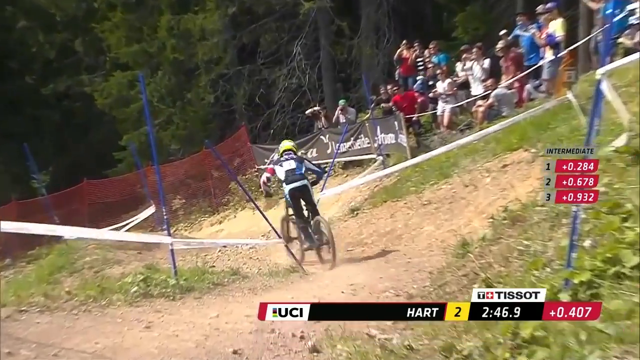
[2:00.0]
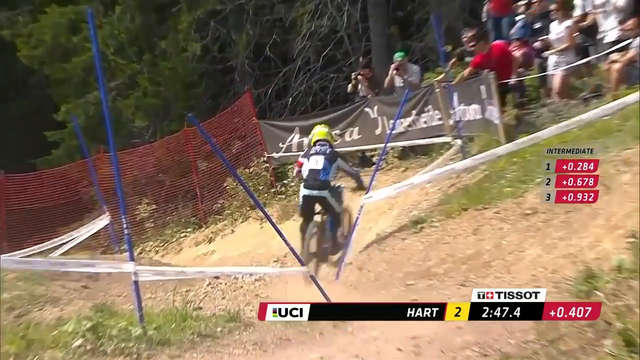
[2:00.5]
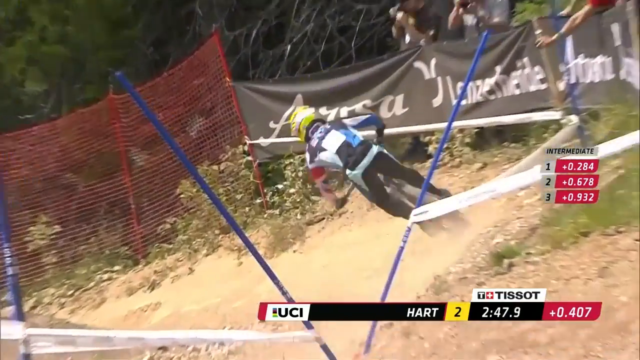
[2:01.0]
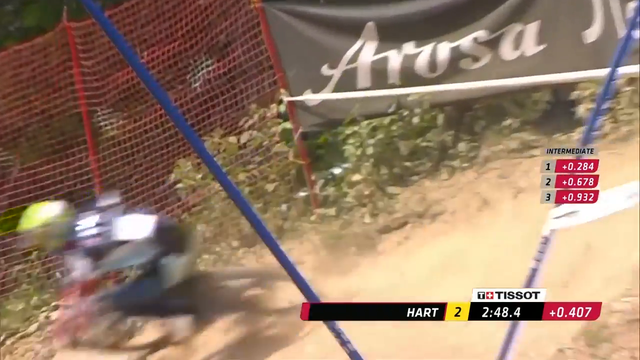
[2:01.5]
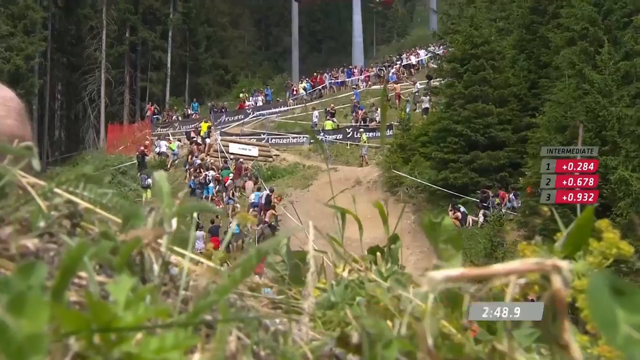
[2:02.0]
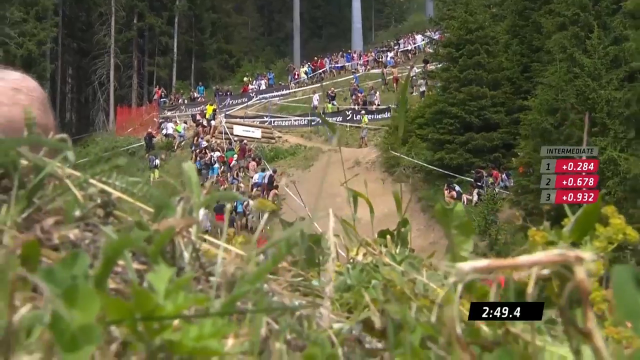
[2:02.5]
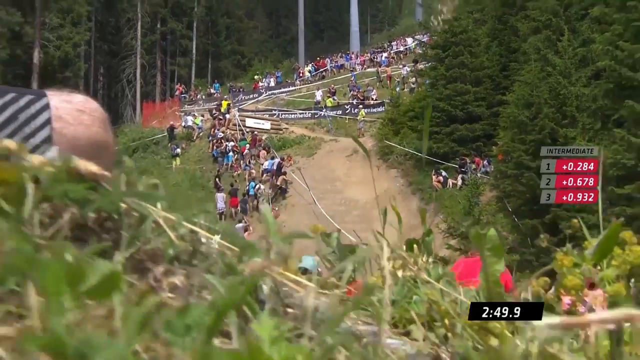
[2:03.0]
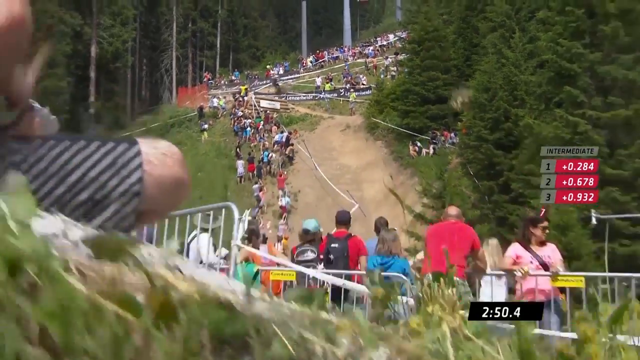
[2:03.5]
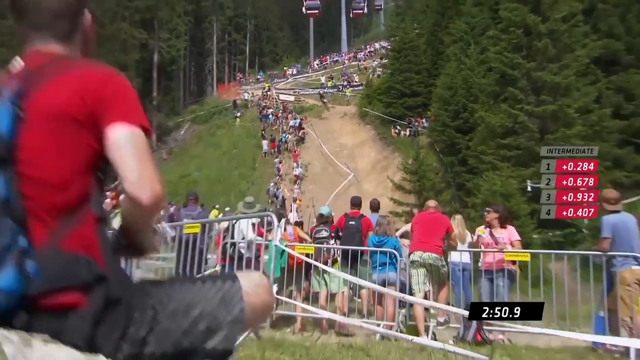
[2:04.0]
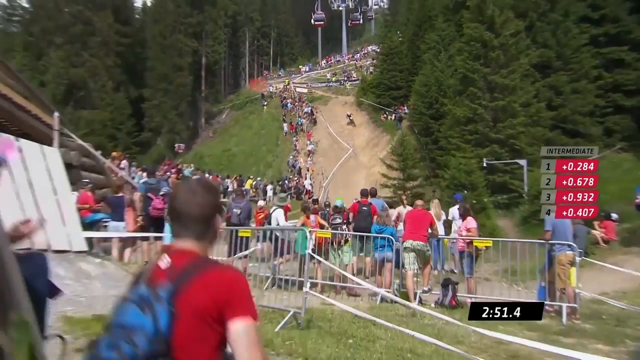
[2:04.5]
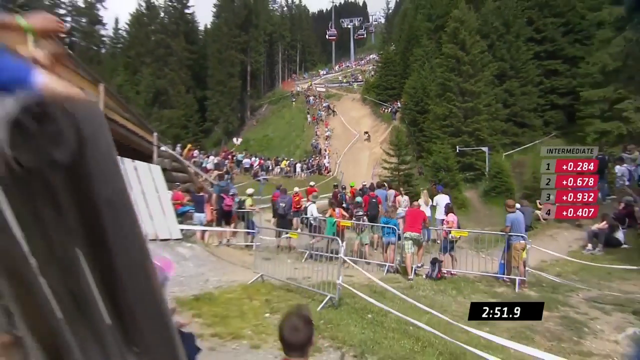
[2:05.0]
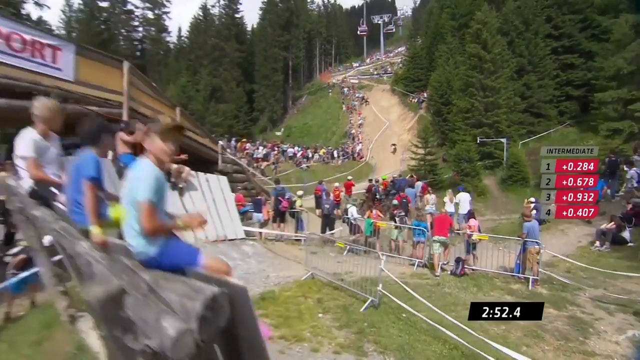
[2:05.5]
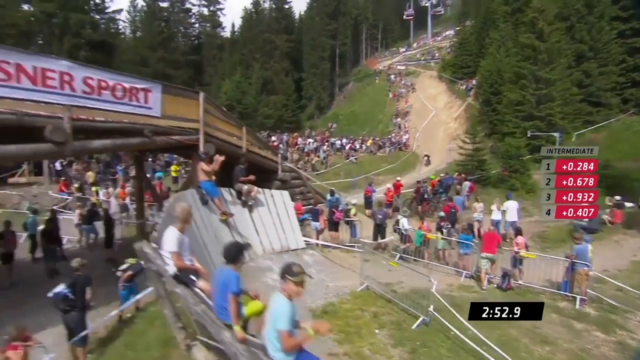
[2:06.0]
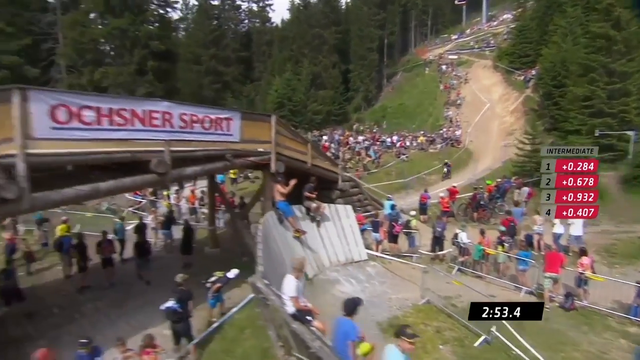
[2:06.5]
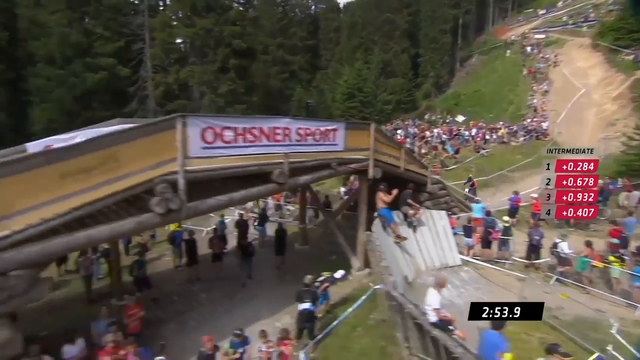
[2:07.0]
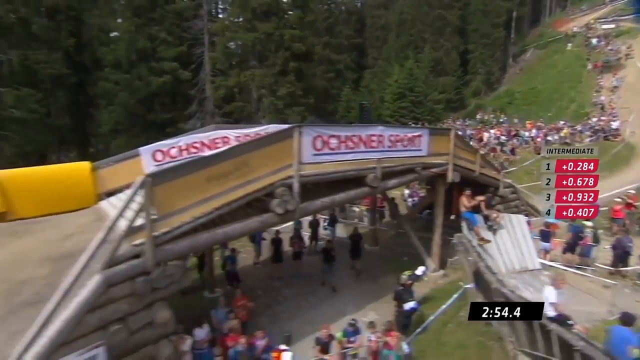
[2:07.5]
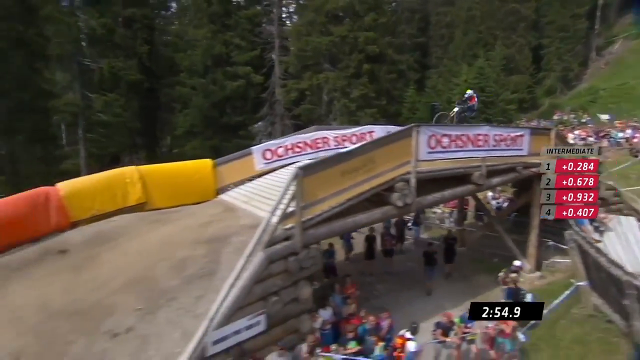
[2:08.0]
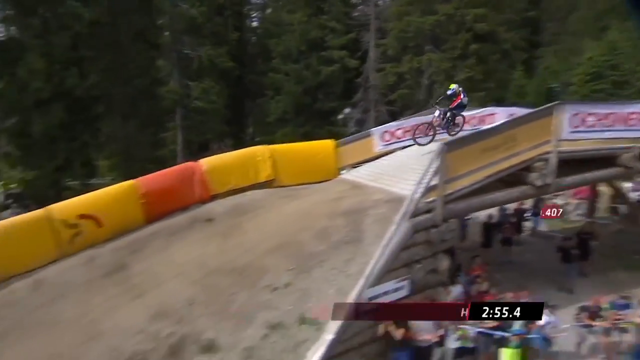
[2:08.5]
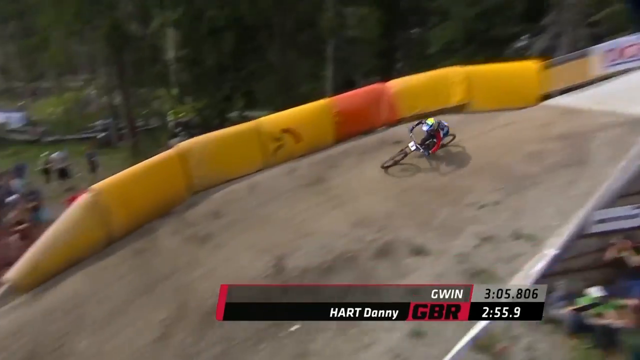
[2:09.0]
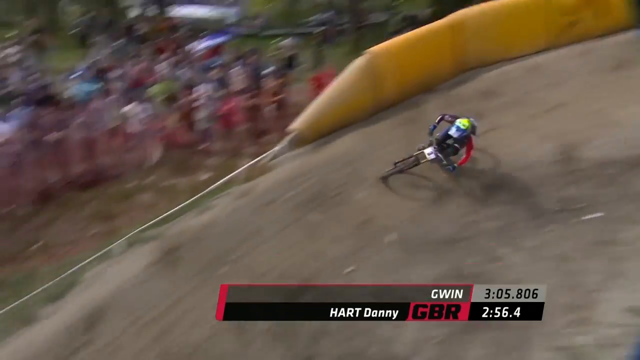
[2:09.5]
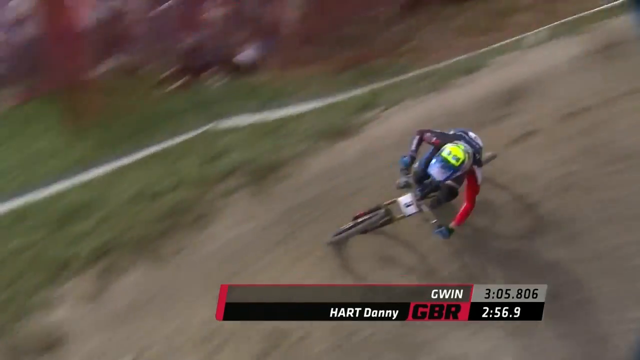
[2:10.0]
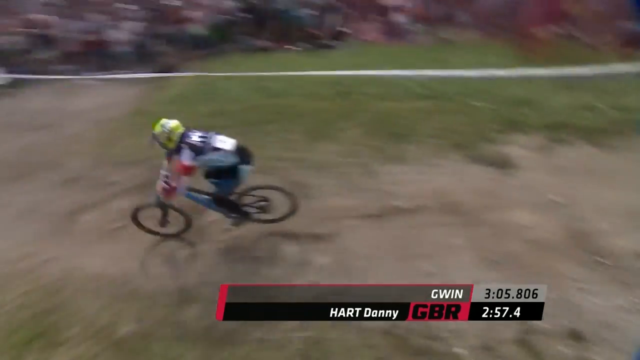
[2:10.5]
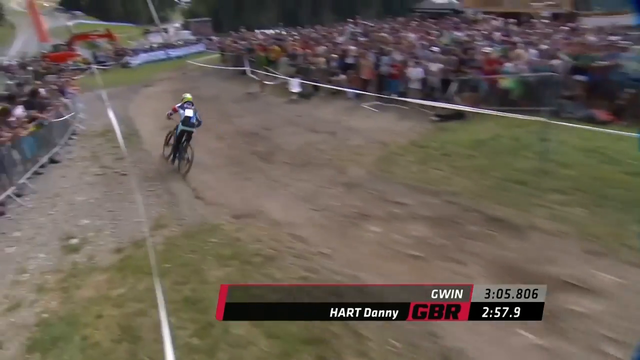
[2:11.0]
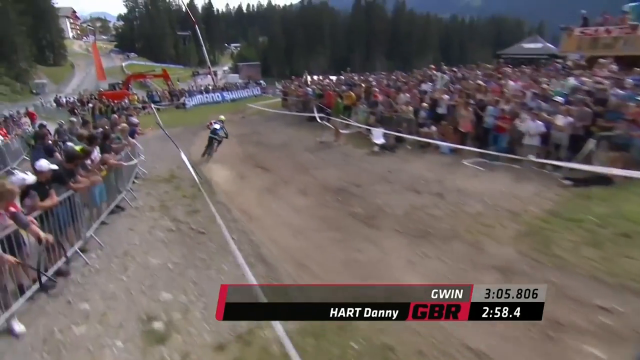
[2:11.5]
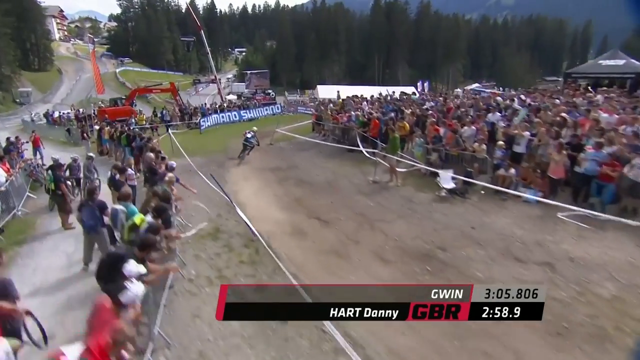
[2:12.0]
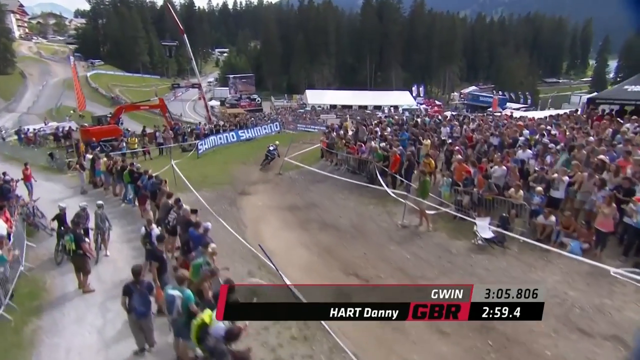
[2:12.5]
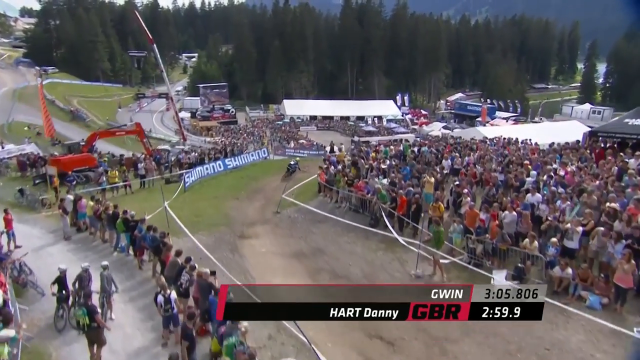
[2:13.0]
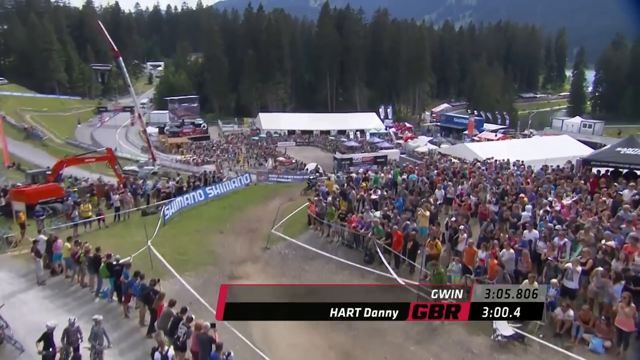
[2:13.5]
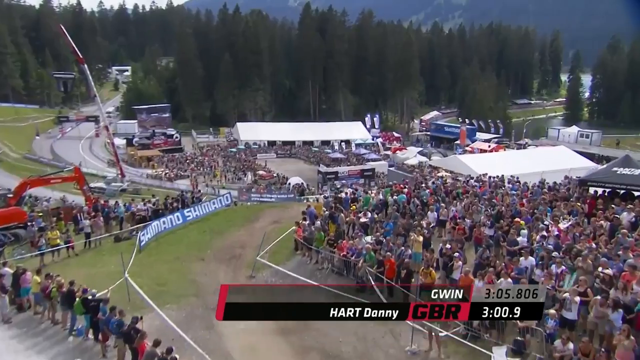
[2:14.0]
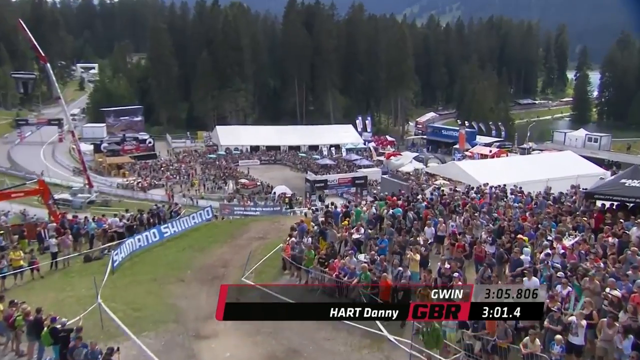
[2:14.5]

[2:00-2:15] The biker comes further down the hill into an area with a ton of people standing on either side of the dirt path, which is separated with white tape. He goes over a bridge that catapults him into the air, with more people standing under and around it. An Ochsner Sport banner is on the bridge. It looks like he is about to reach the end, as large white tents, flags and many more people are visible in the distance where he is heading.